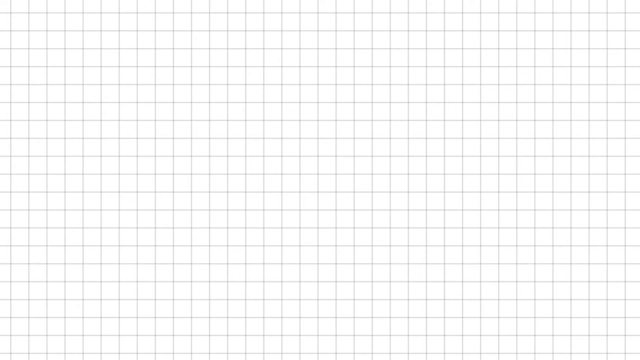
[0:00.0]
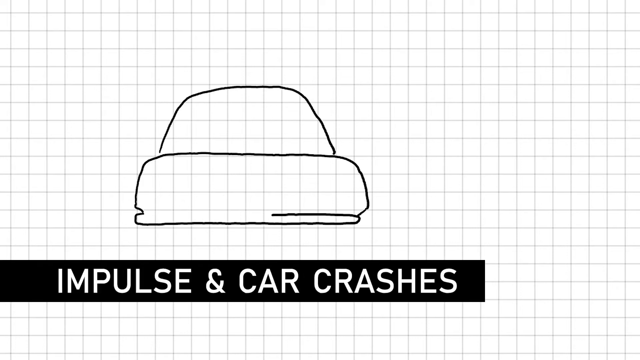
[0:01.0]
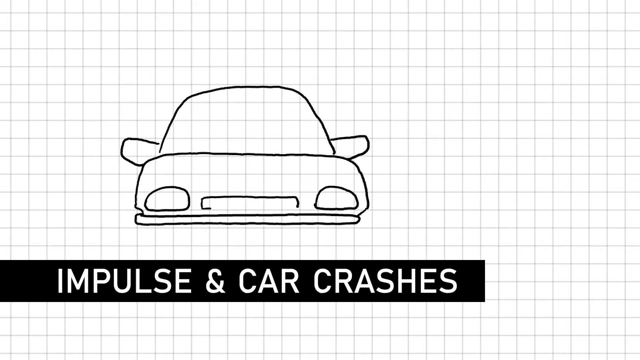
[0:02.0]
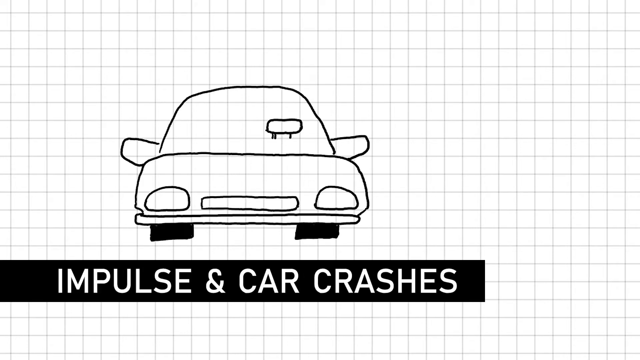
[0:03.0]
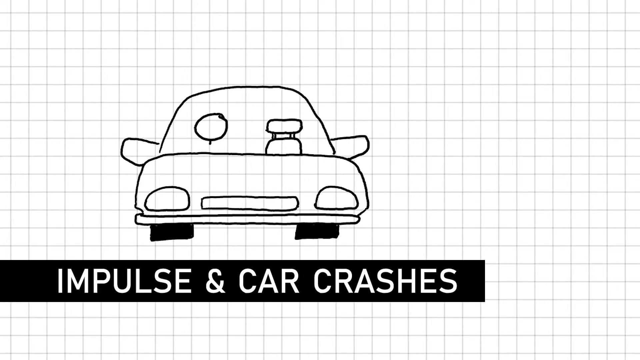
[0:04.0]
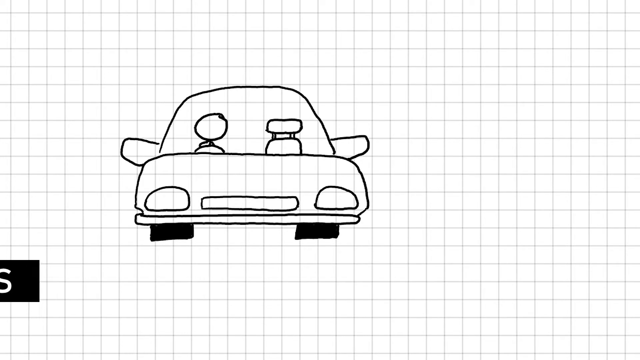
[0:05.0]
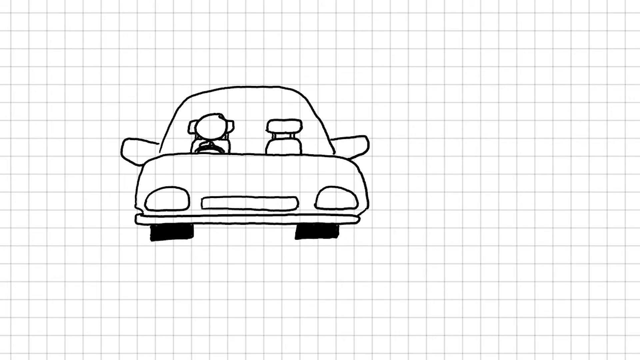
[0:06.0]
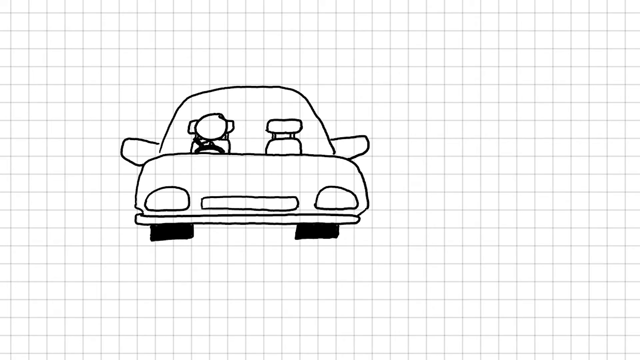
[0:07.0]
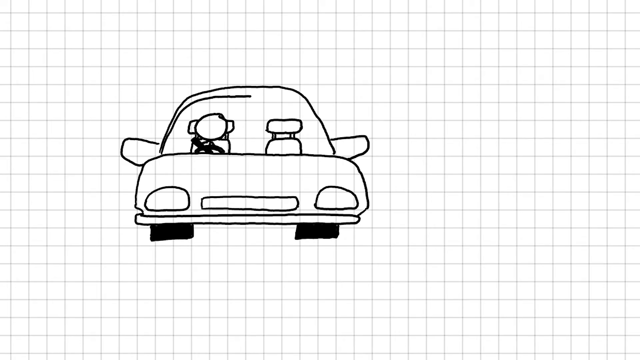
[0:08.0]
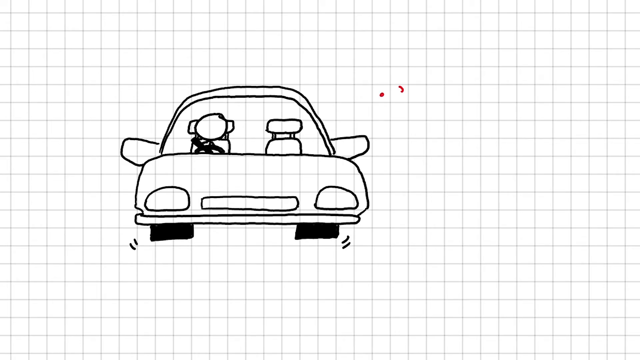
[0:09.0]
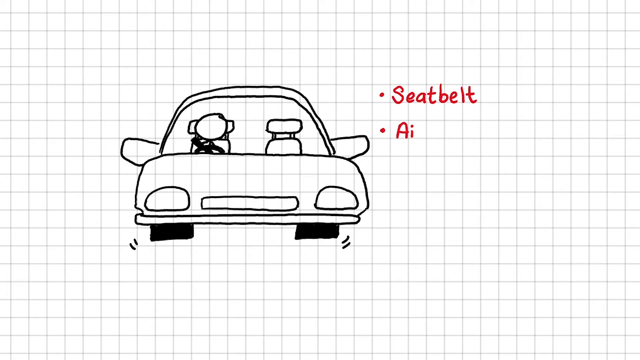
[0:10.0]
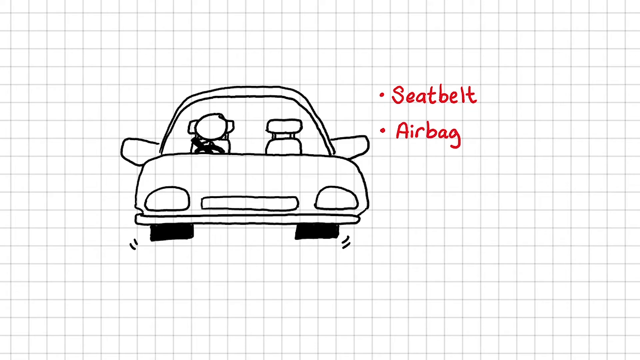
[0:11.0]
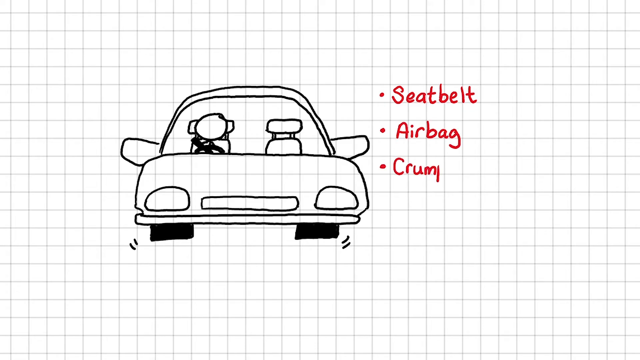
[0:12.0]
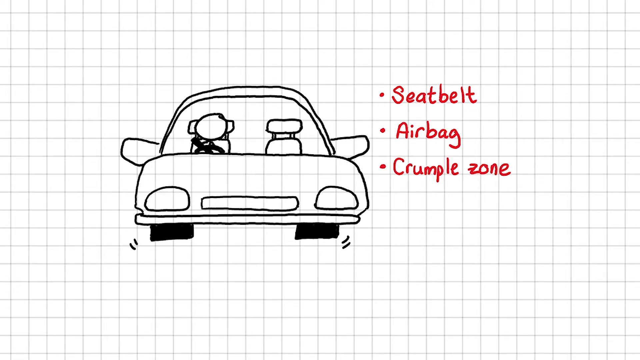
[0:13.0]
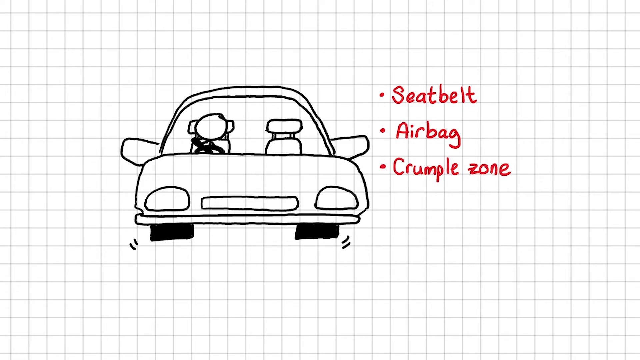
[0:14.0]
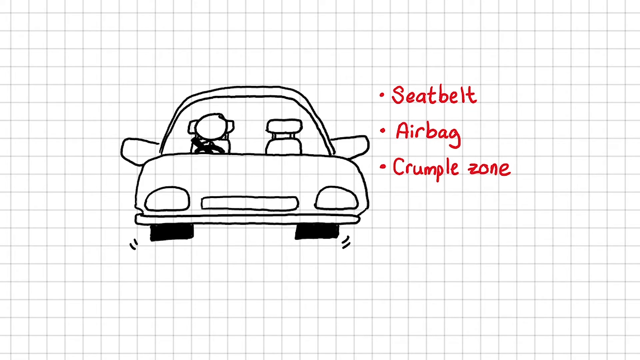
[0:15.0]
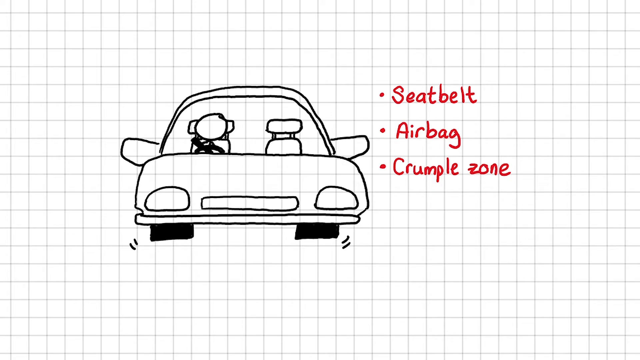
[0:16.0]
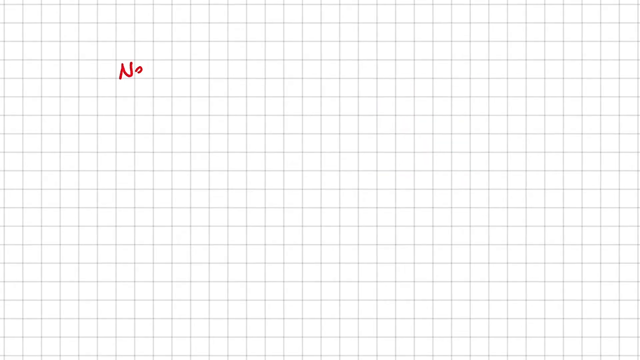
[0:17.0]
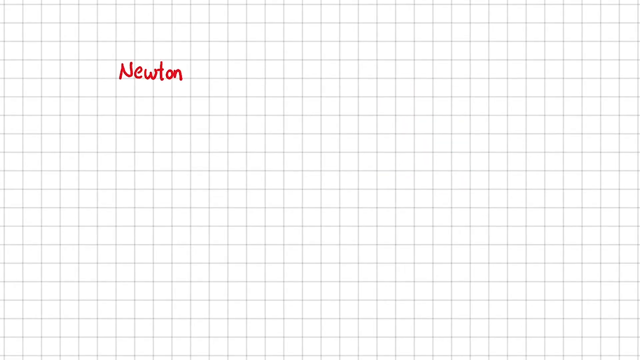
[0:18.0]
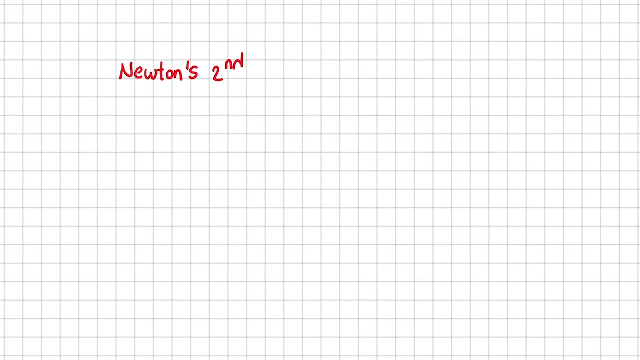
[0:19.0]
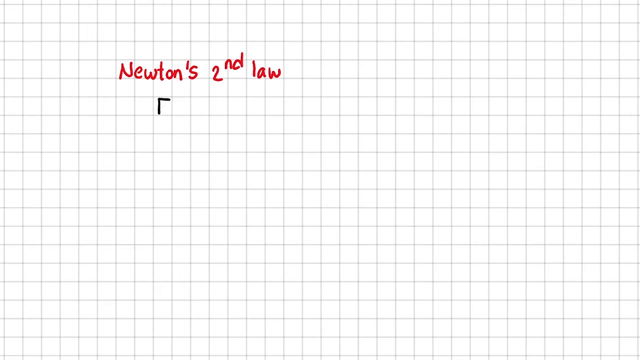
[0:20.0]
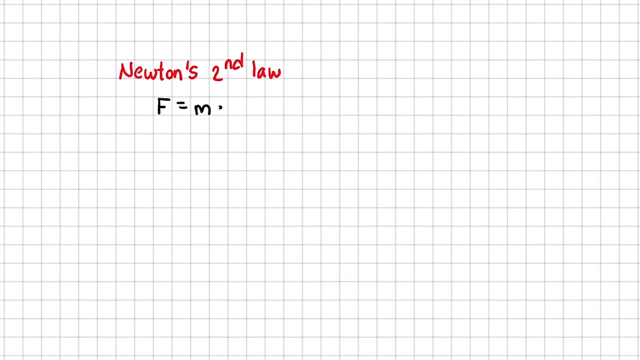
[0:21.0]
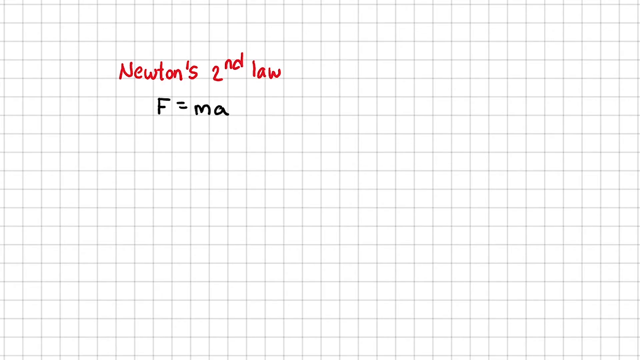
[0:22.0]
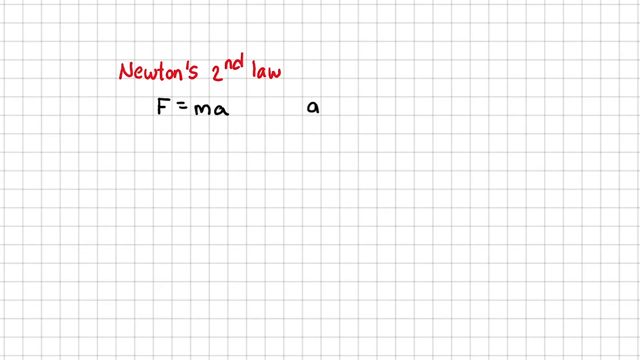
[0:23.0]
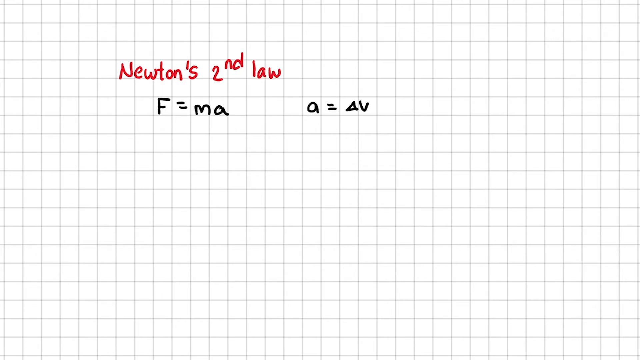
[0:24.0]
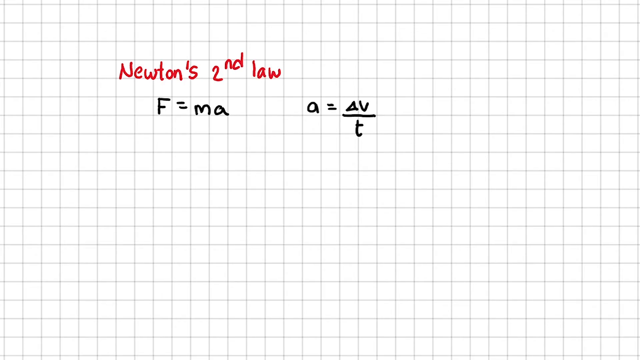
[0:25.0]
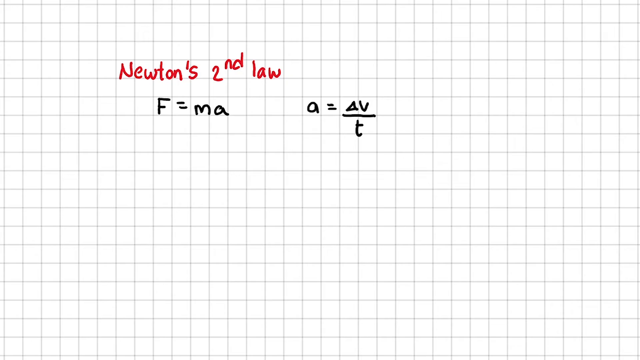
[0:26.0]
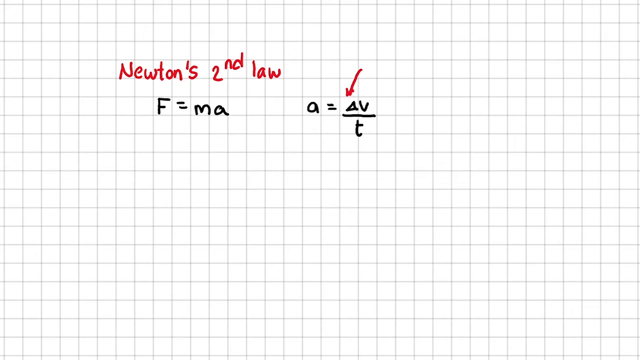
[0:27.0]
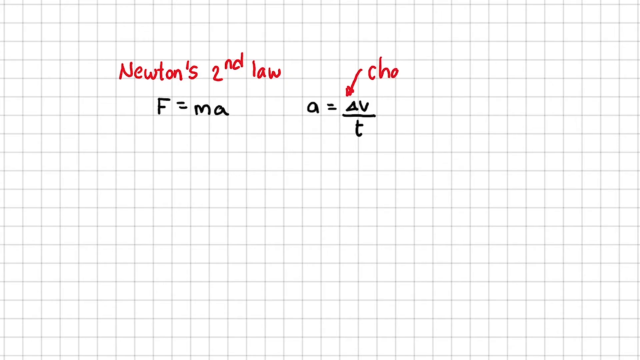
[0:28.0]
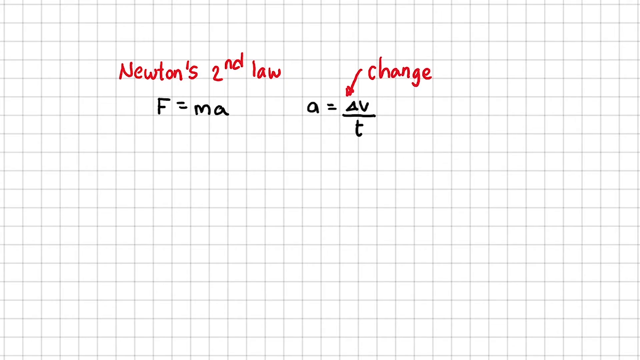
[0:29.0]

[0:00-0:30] On a presentation slide with a grid background, a black rectangular banner slides in from the left, covering three-fourths of the screen, with "impulse and car crashes" written on it in white. Above it, a black hand-drawn outline sketch is drawn part by part. It looks like the outline of a car, with headlights, mirrors and wheels shown as black blocks and two seats; a person wearing a seat belt is drawn sitting on the right side. To the right of the car sketch, red bullet points appear one by one: "seatbelt", "airbag", "crumpled zone". The slide then changes to another with the same grid background, where "Newton's second law" is written in red. Below it, "F=ma" is written in black, and after a few tab spaces "a=delta v/t" is written. A red arrow is then drawn above the second formula, pointing at it, and labeled "change".